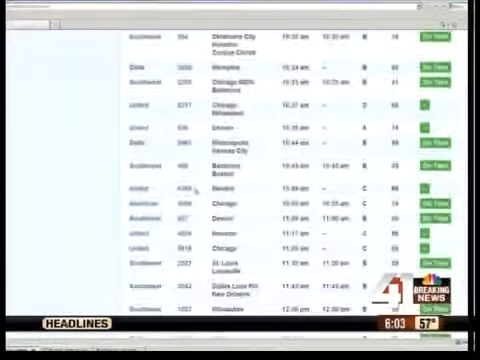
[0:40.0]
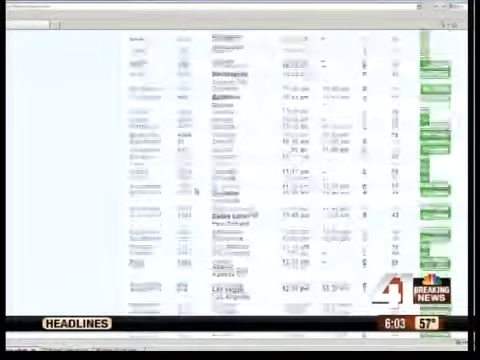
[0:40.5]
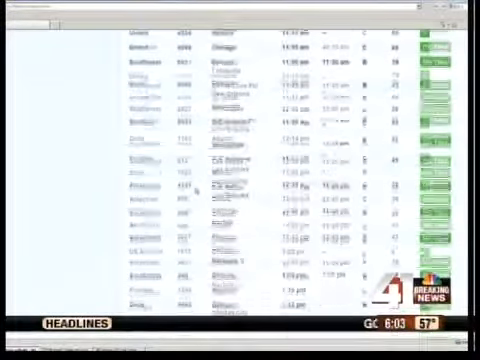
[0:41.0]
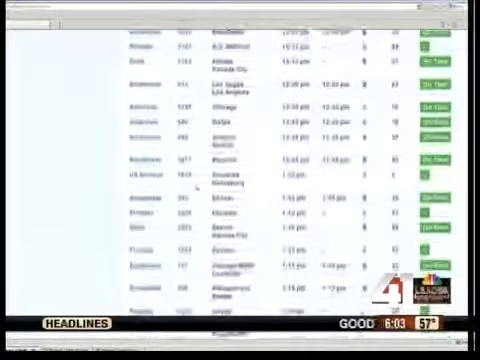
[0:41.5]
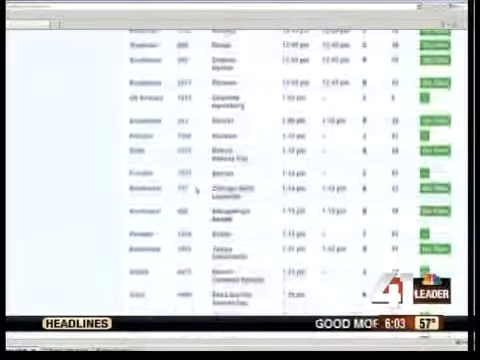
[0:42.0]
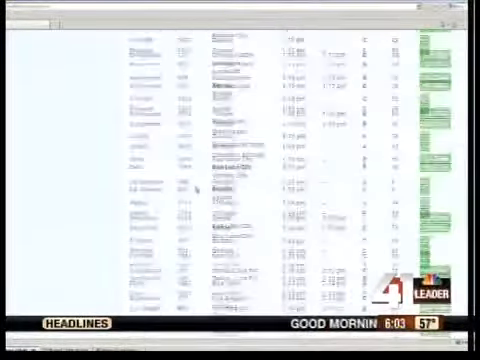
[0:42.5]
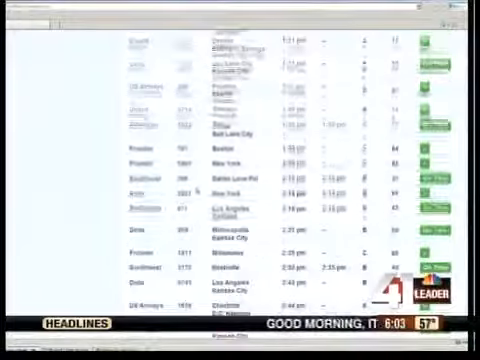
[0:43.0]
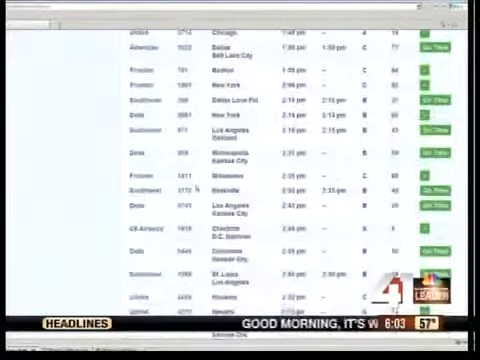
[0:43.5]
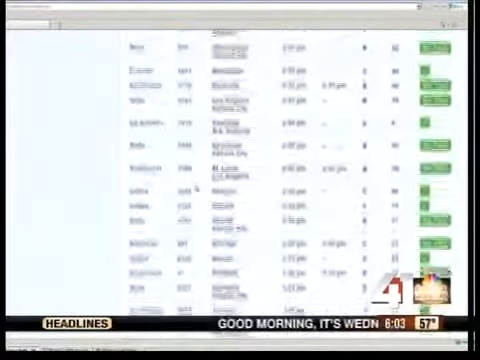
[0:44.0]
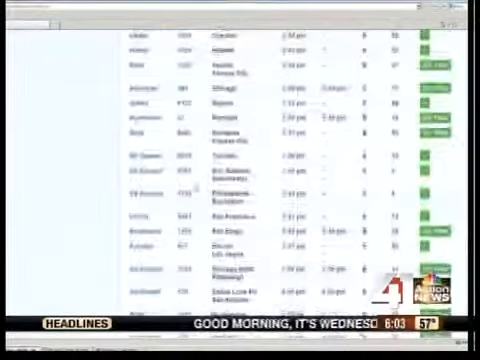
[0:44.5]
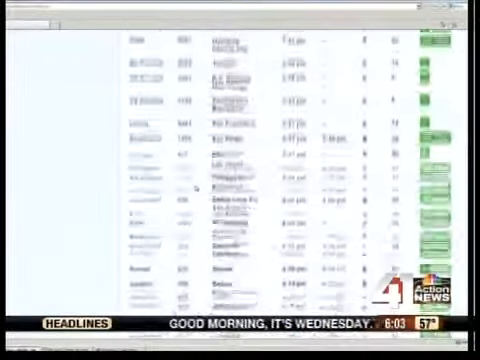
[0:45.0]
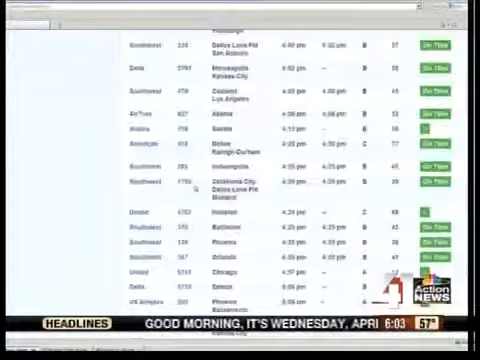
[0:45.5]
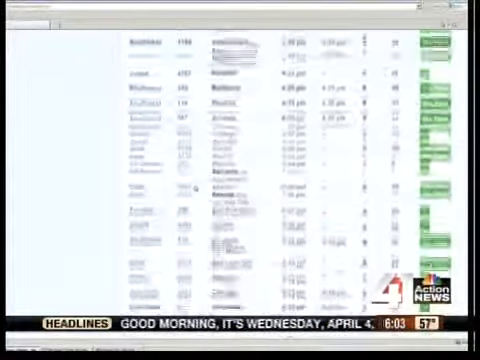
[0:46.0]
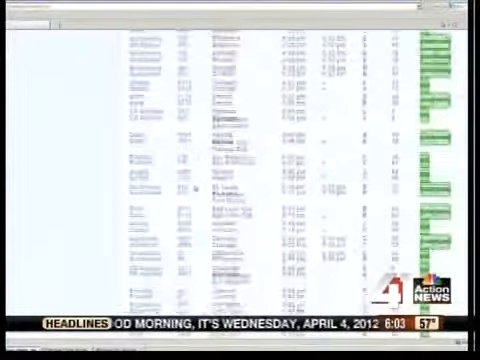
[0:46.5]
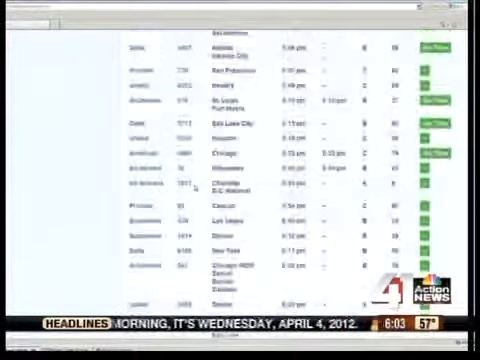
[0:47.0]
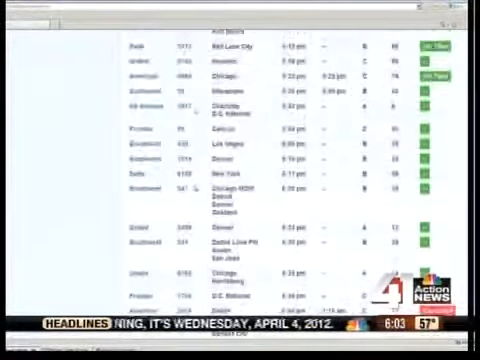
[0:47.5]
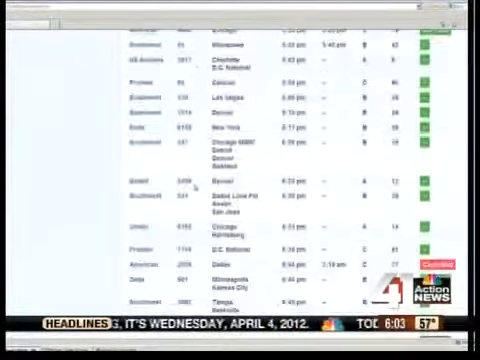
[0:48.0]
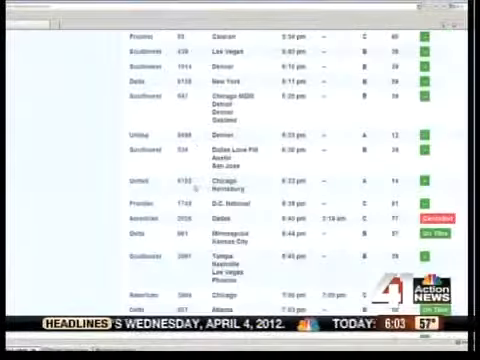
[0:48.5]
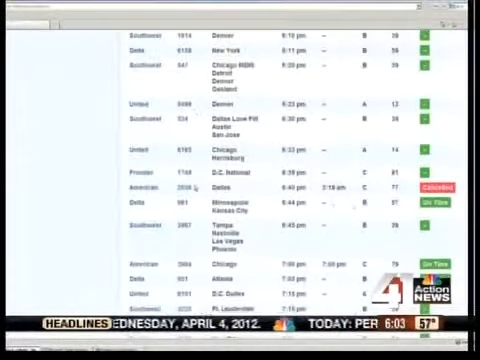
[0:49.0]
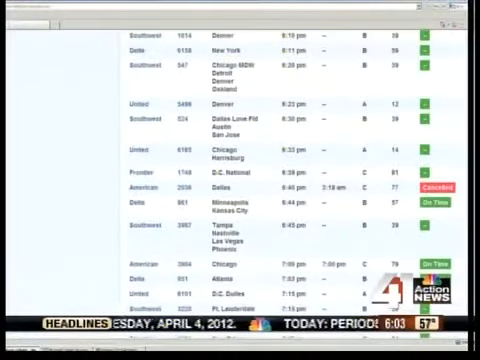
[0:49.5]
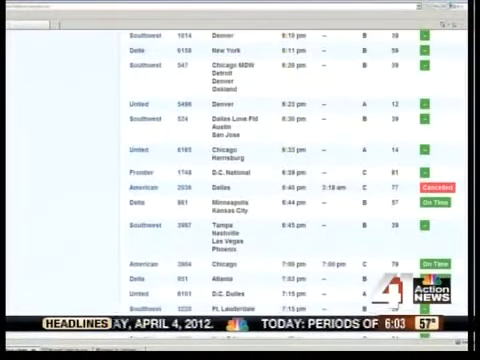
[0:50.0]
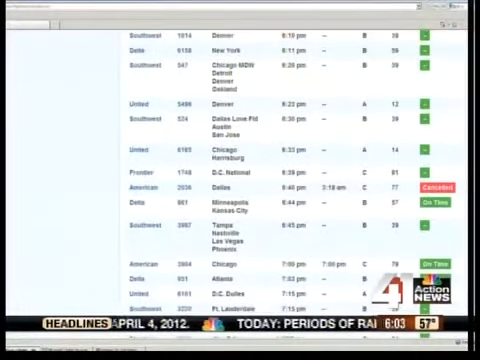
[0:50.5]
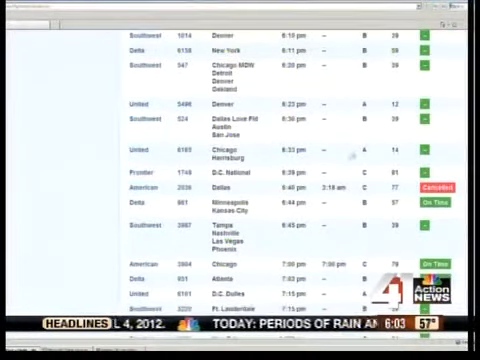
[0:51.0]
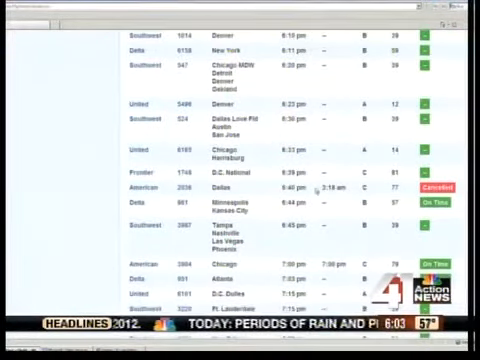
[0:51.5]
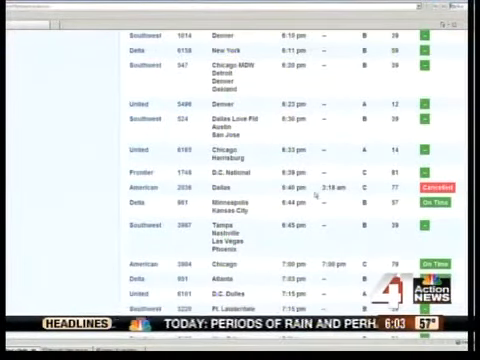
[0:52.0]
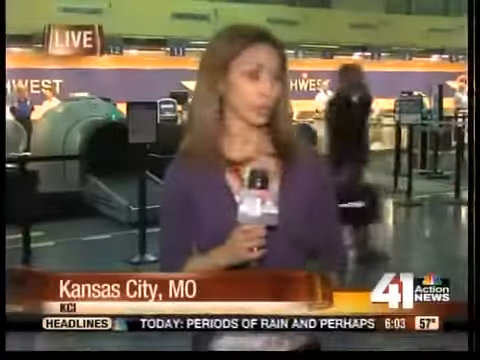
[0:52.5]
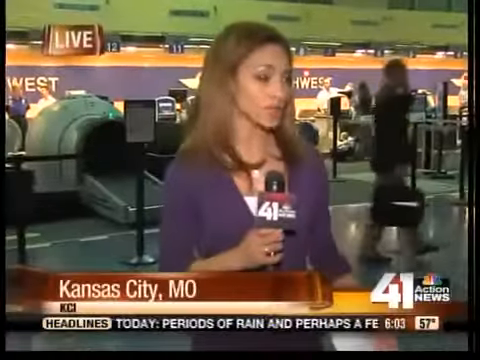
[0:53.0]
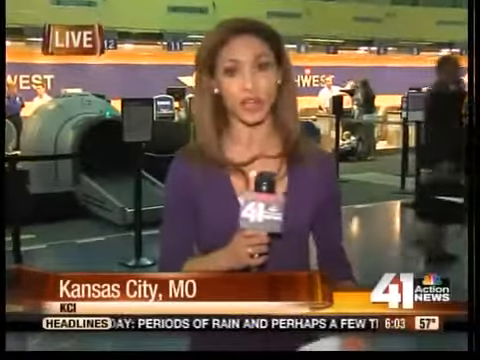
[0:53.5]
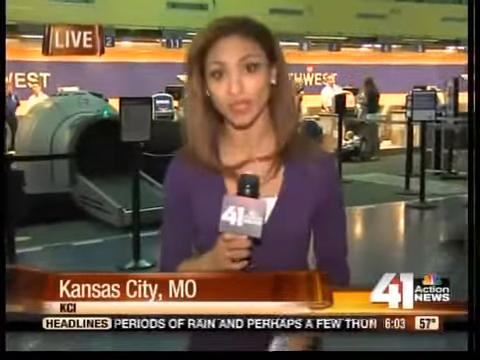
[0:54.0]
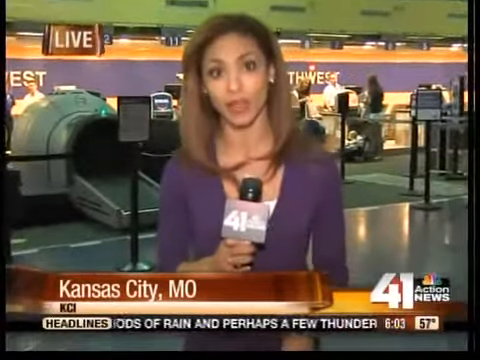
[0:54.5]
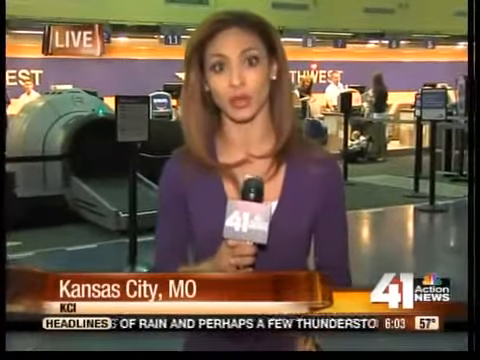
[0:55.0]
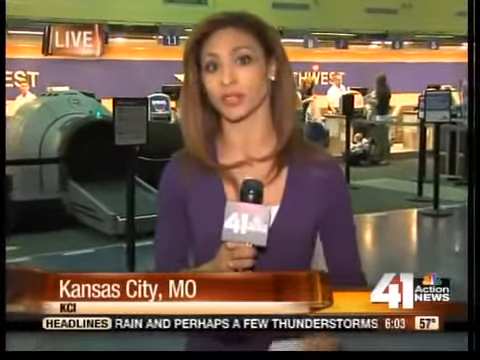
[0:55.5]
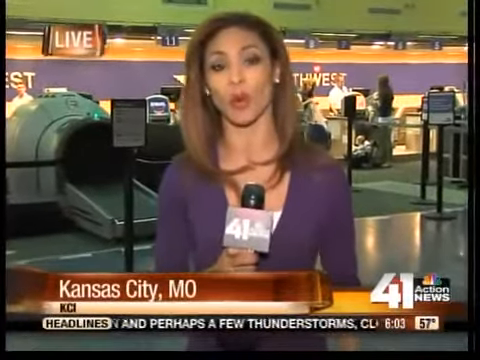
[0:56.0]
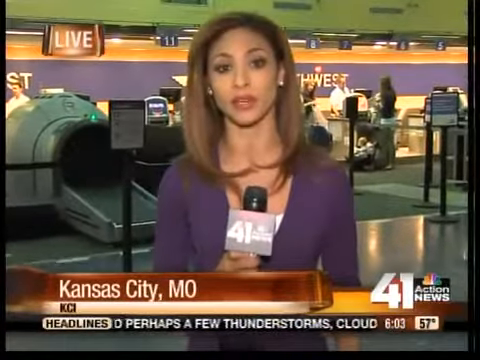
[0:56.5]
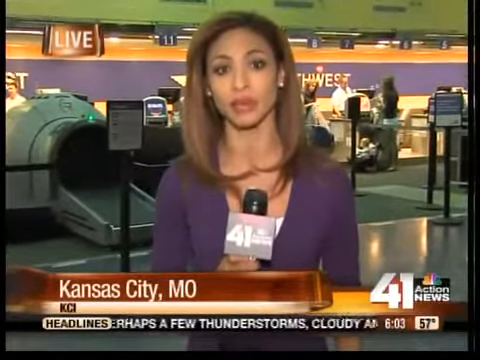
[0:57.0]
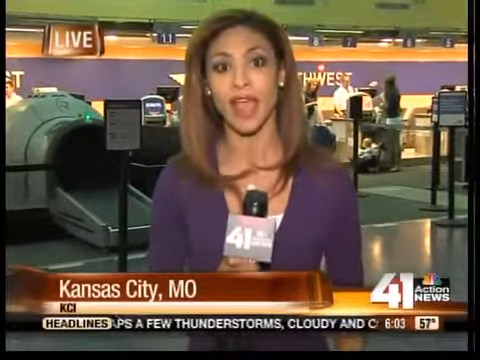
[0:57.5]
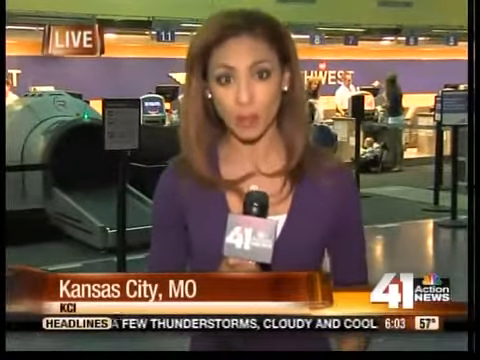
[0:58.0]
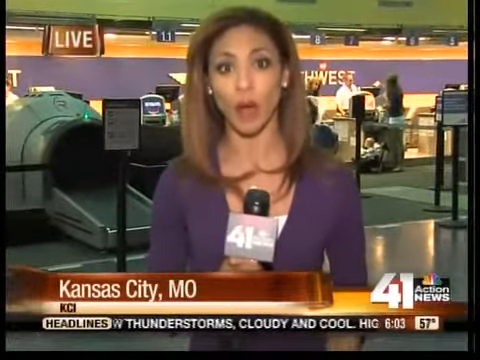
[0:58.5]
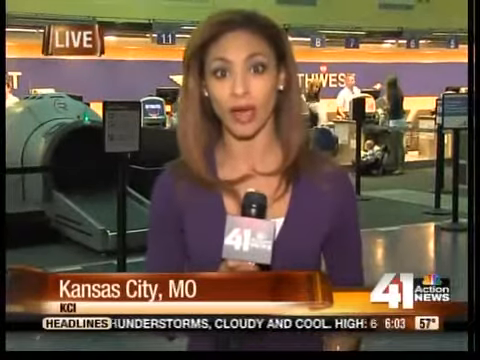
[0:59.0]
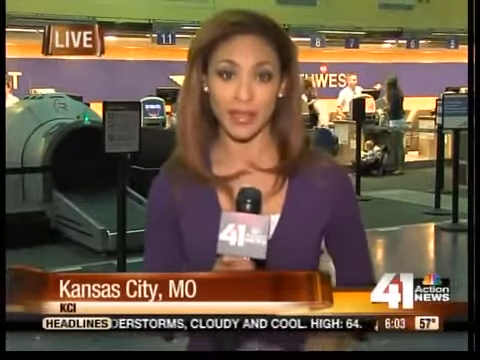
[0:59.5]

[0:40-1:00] A series of slides scrolls past quickly downward, somewhat blurry, and a red slide is clicked, though its text is not legible. The shot returns to the presenter with light brown hair, wearing a purple top with a white vest underneath and holding a microphone marked "41 Action News". The location is Kansas City, MO. The headline below reads "periods of rain and perhaps a few thunderstorms, cloudy and cool, high is 64", and it also says "good morning, it's Wednesday, April 4, 2012". The presenter speaks to the camera; she wears pearls and orange lipstick. Behind her is a terminal where bags are put in and scanned, standing points with instructions on them, and a yellow wall.